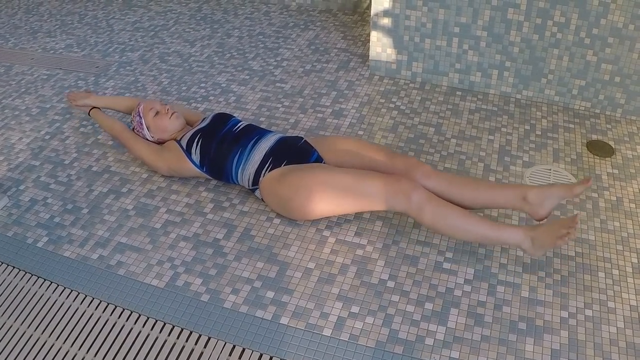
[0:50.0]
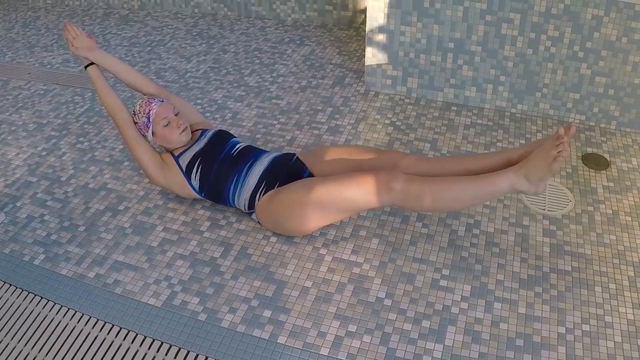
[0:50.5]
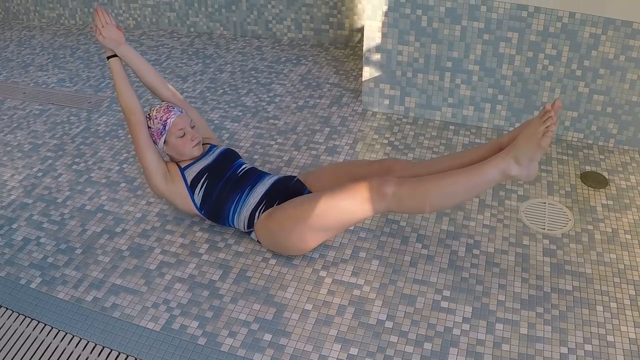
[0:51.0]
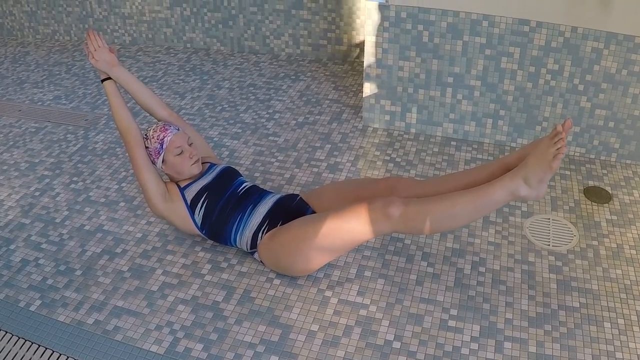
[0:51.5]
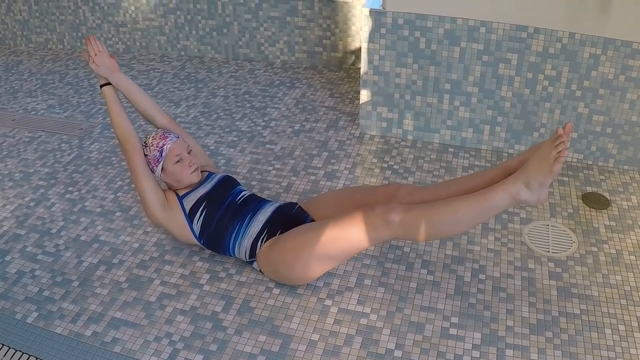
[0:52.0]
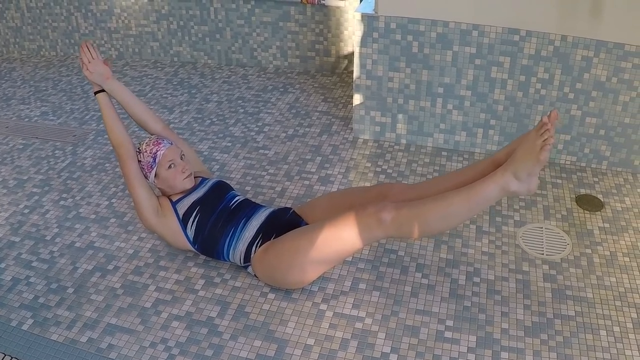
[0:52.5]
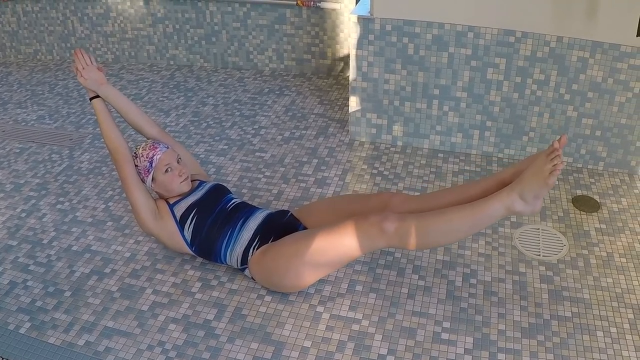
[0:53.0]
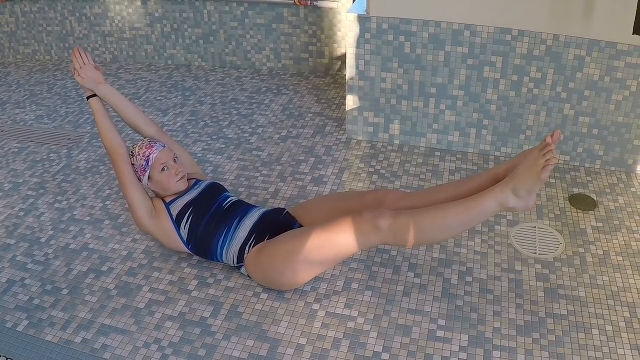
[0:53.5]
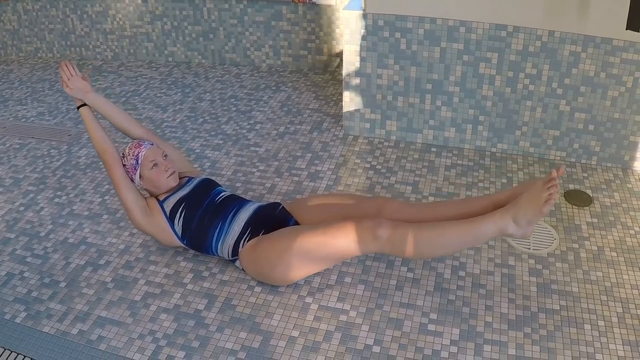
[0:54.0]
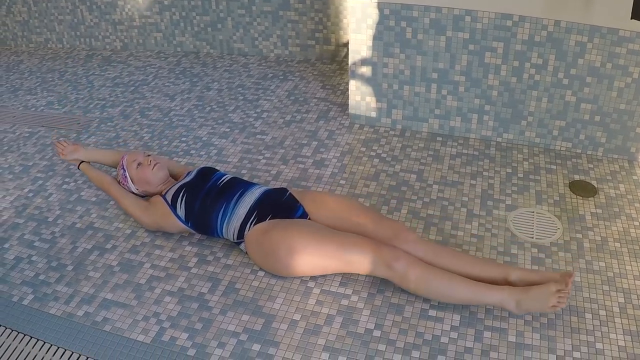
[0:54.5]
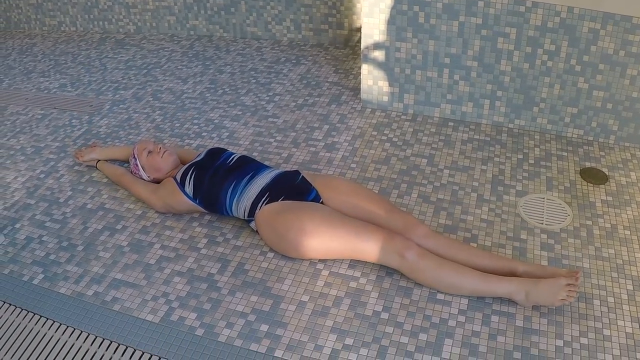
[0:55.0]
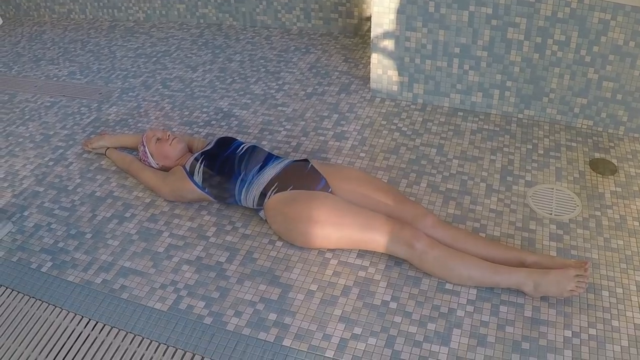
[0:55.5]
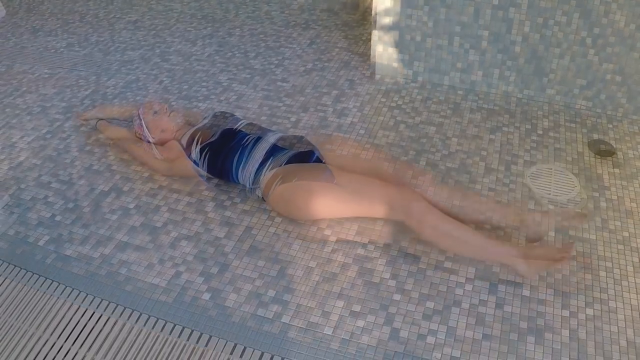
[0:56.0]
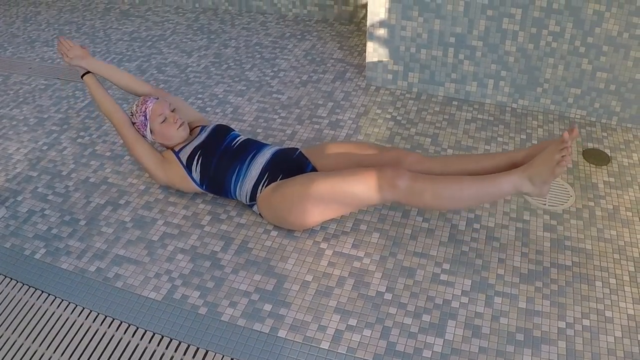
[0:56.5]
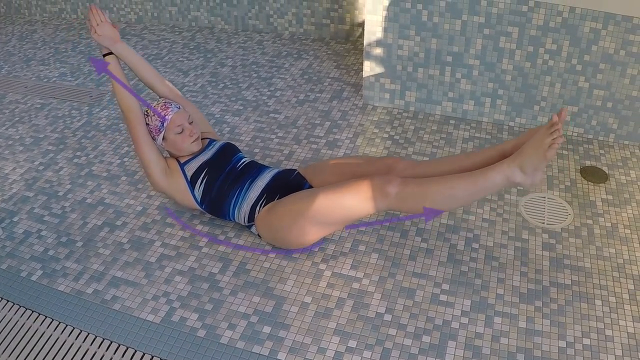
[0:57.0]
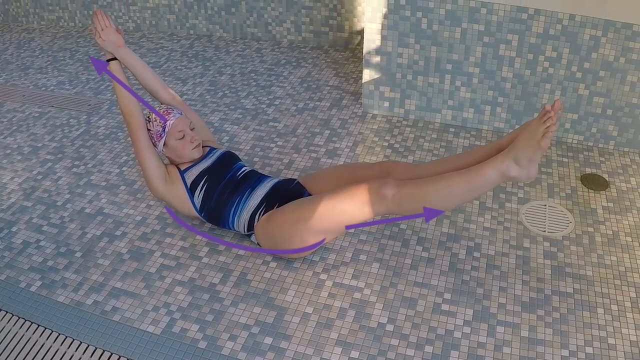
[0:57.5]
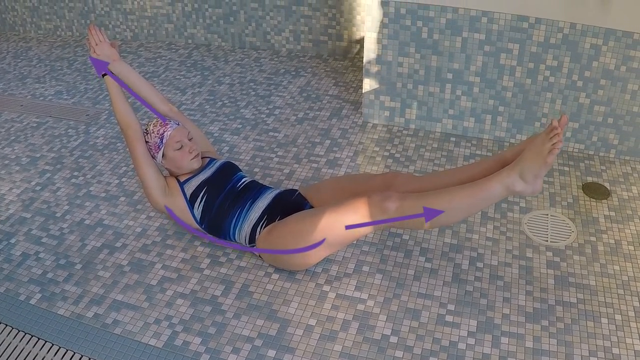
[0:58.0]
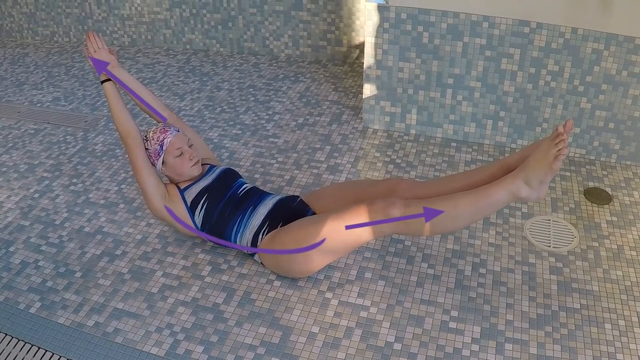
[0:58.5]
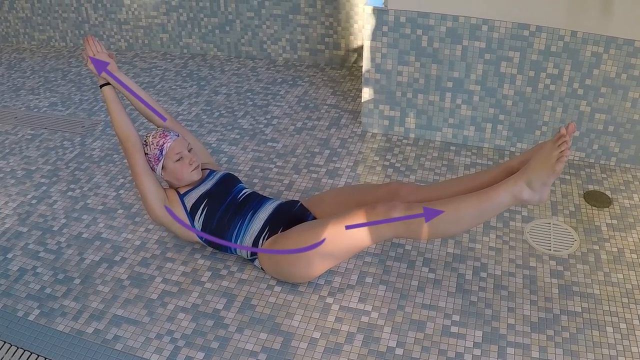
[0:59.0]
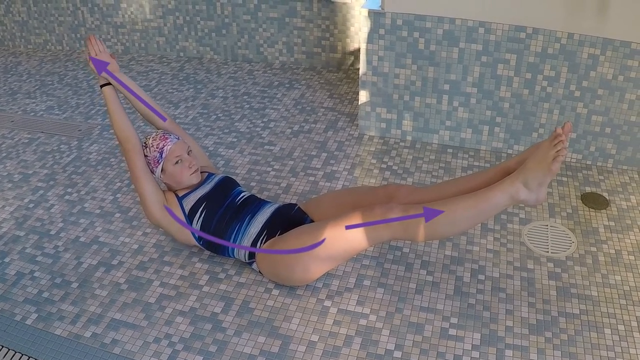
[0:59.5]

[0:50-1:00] The female swimmer lies on the floor outside of the pool with her back against the floor, her hands outstretched above her head and her feet and legs straight and pointed. She then mimics the motion of a v-up, raising her arms higher above her head, clenching her abdomen and raising her feet several feet off the ground, making her body into more of a U or V shape. The video cuts to show her body in a U shape, with a curved purple line underneath her back and rear end showing the curvature of her spine and body, and purple arrows along her arms and legs showing that they are straight out.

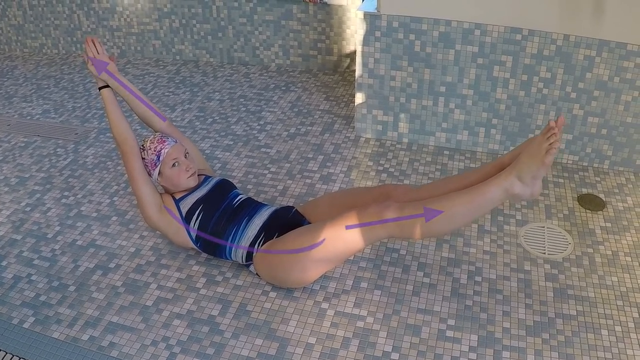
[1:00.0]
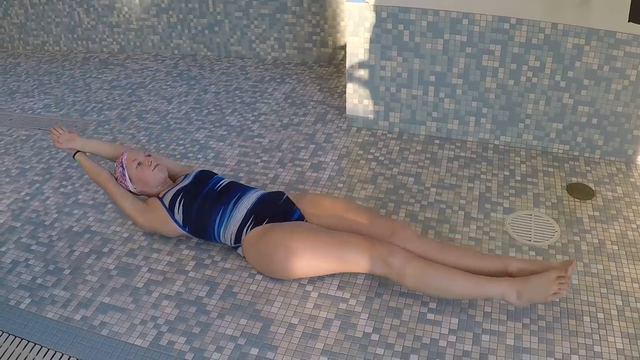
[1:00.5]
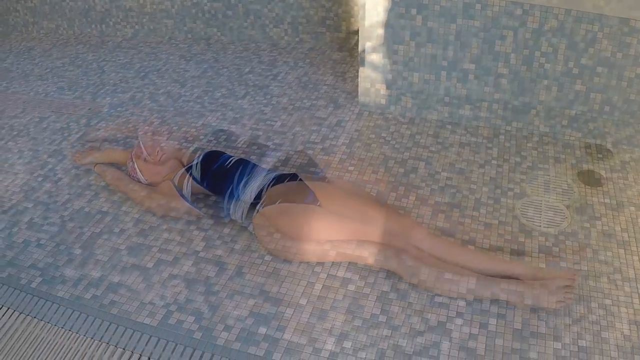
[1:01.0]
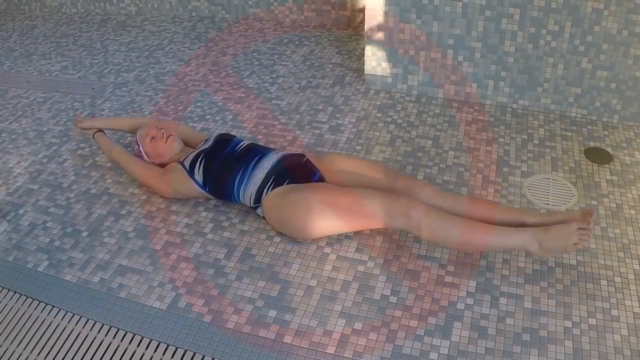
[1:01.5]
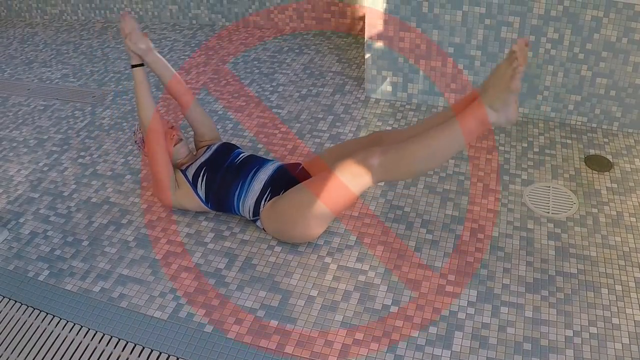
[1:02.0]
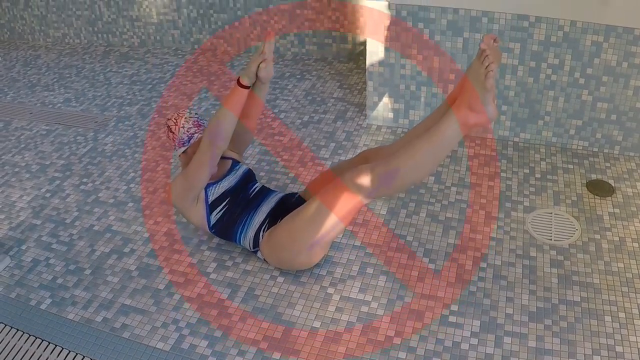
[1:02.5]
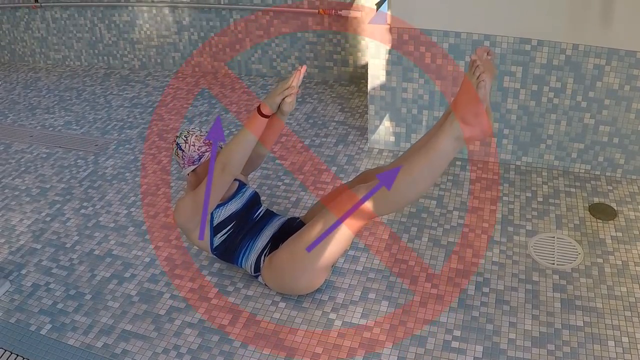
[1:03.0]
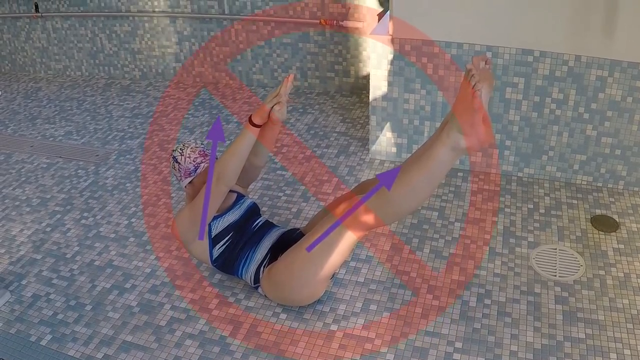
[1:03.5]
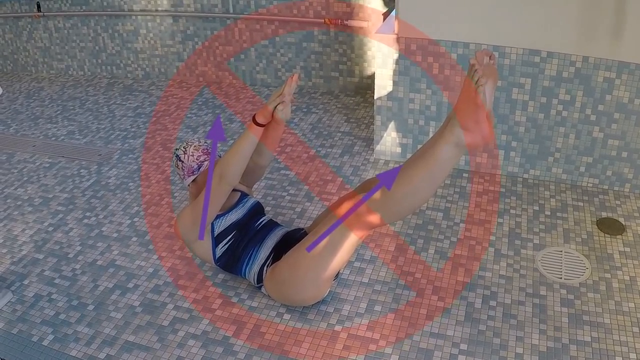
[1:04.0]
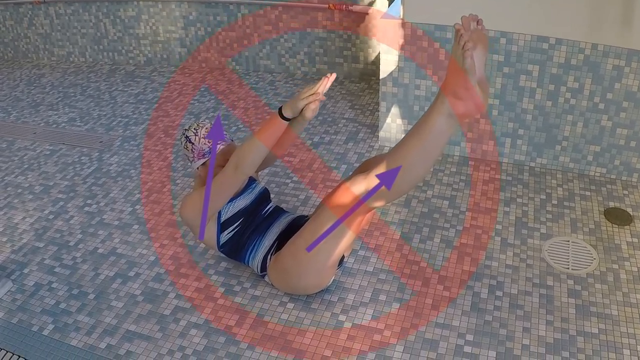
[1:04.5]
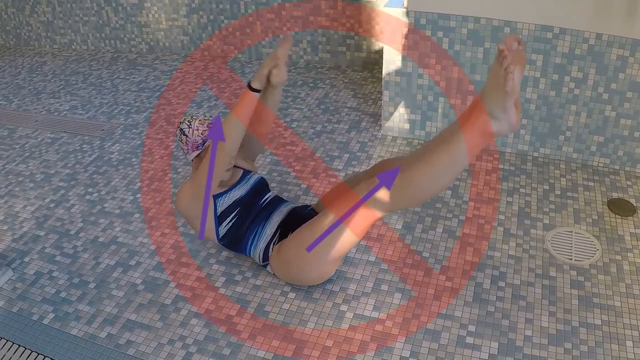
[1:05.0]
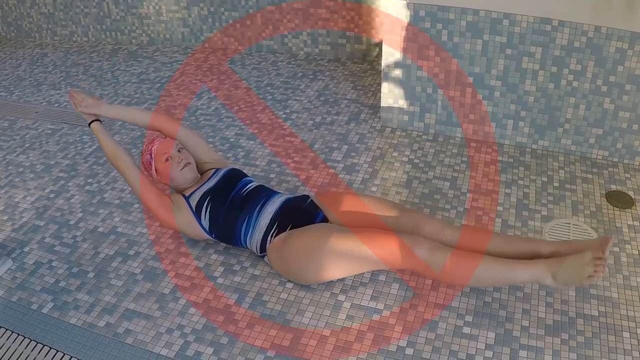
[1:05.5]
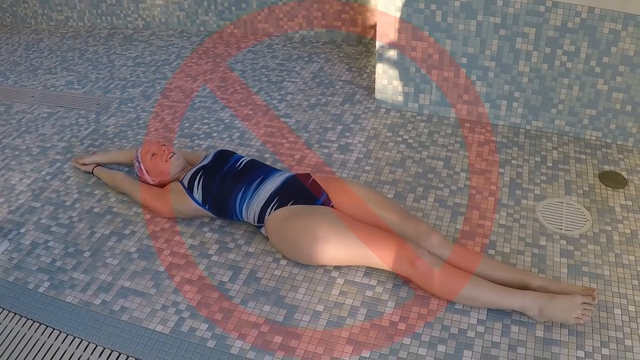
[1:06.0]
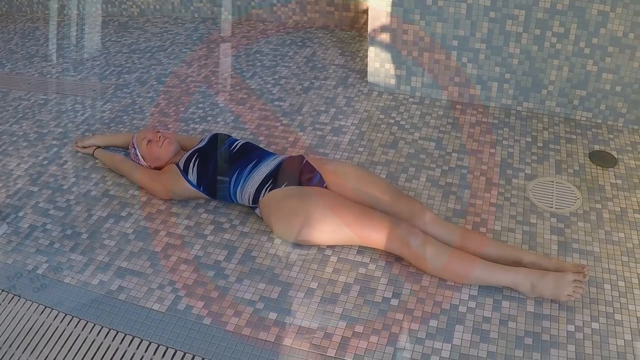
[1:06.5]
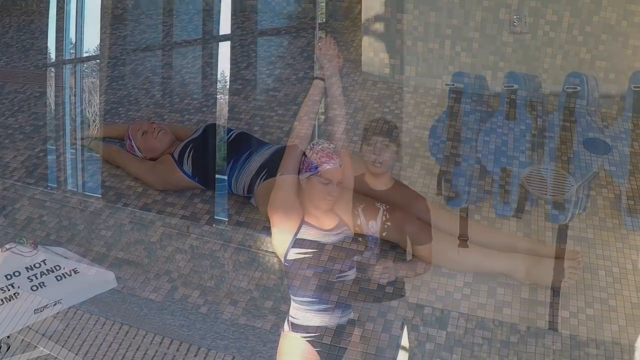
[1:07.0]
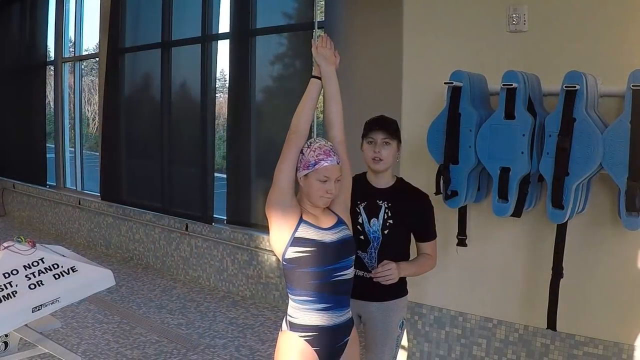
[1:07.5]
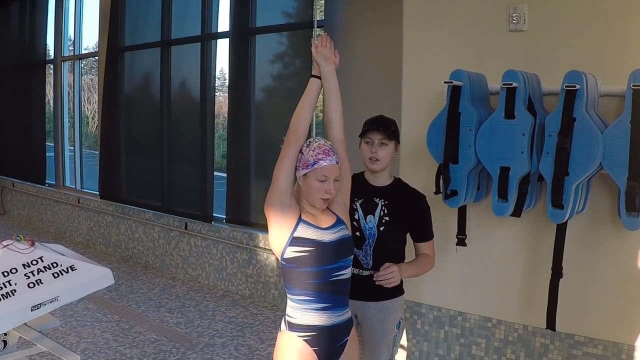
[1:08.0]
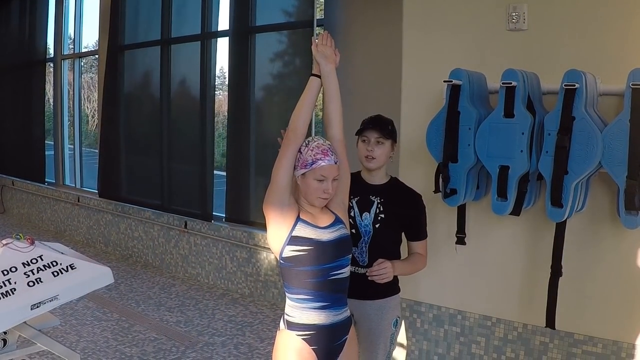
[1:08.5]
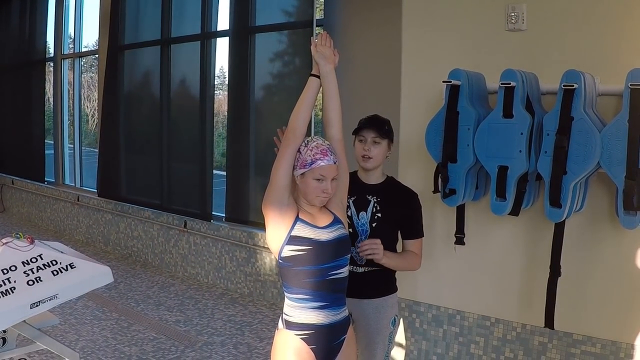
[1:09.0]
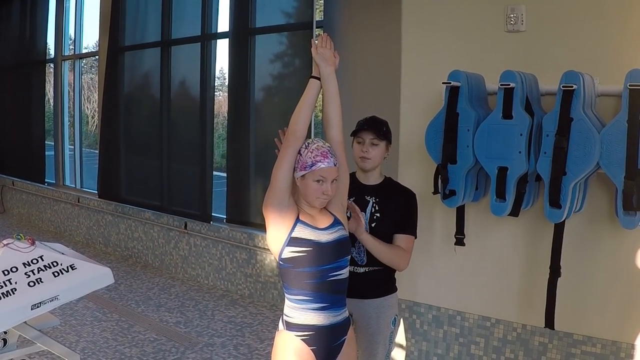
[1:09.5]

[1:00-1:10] The swimmer does a v-up with the purple curved line underneath her back and rear end and two straight purple arrows along her legs and arms. The video cuts to a different scene in which she does a more exaggerated v-up, with her arms stretched perpendicular to her body outward from her chest and her legs raised further than a few feet, almost at a 45-degree angle away from her body. A big red circle with an arrow through it appears, showing that this is not the correct form. The video then cuts to the swimmer standing upright with her arms above her head, her hands over one another and her fingers pointing straight out, showing how her arms should be straight above her head. A fully clothed trainer behind her is clearly talking and commenting on her form.